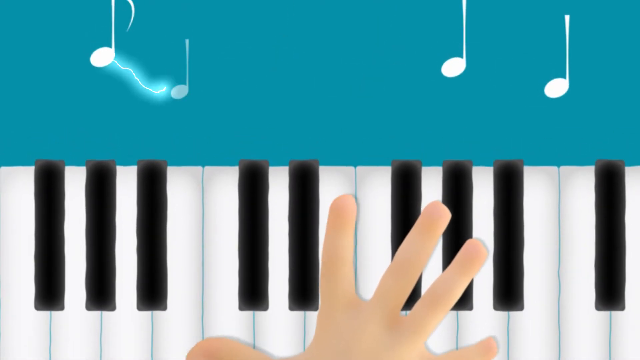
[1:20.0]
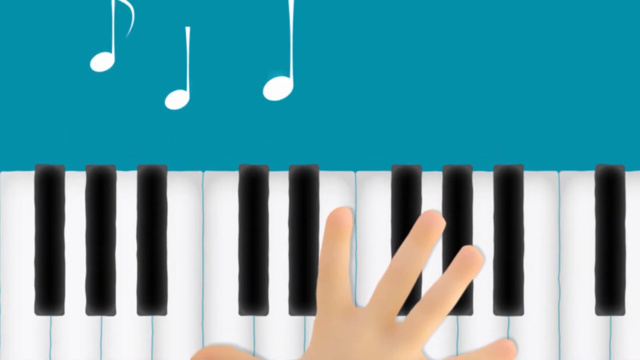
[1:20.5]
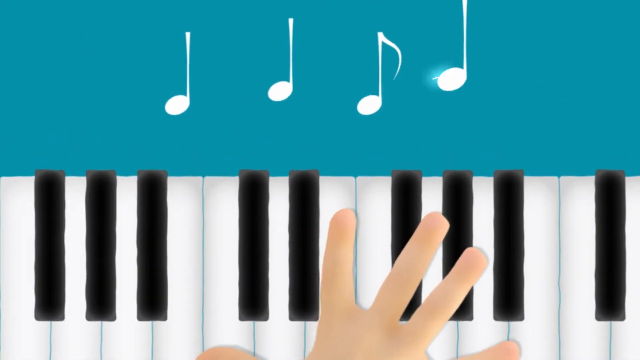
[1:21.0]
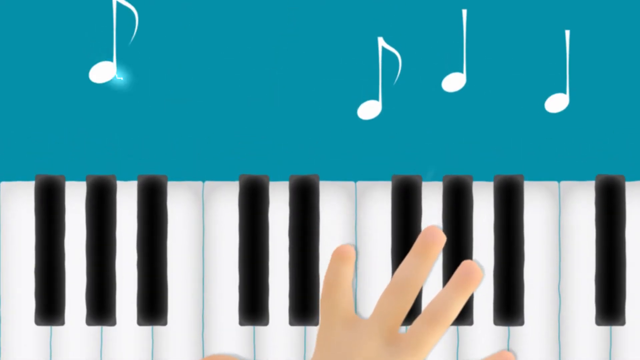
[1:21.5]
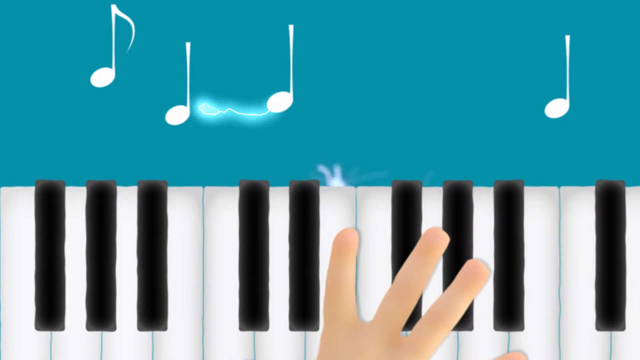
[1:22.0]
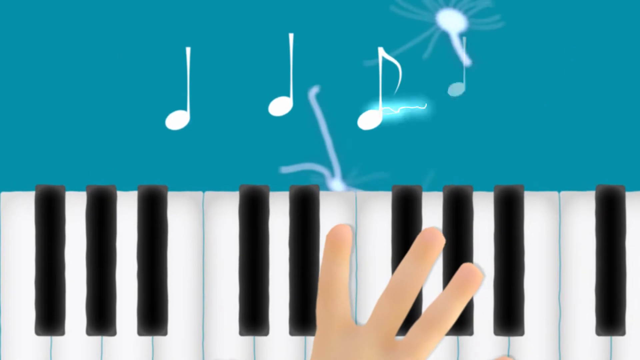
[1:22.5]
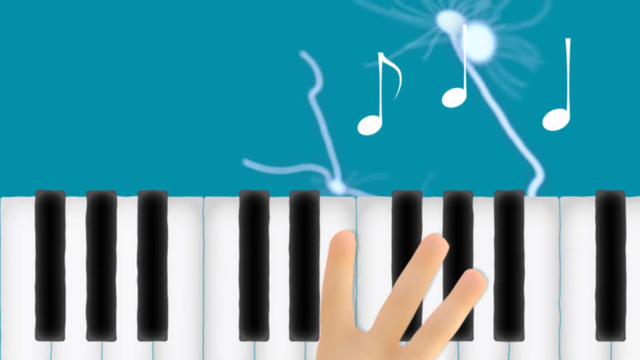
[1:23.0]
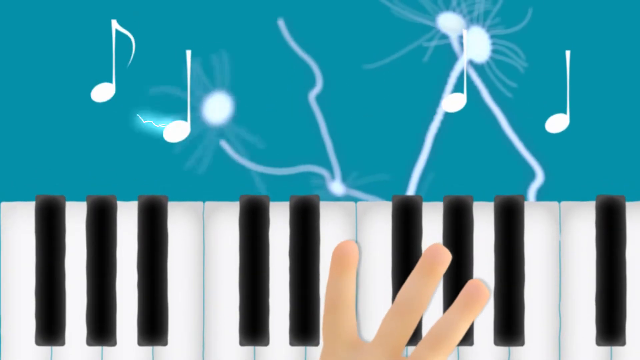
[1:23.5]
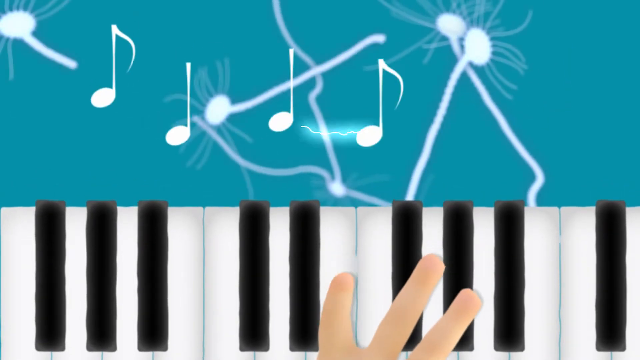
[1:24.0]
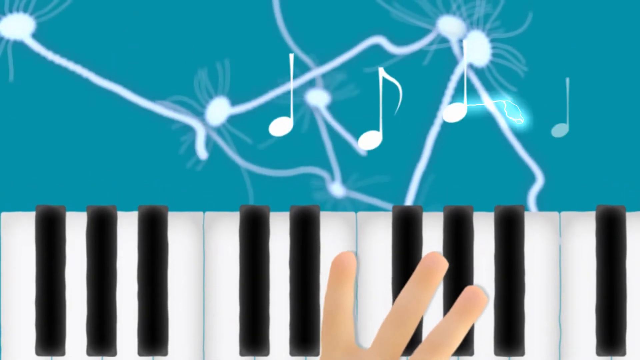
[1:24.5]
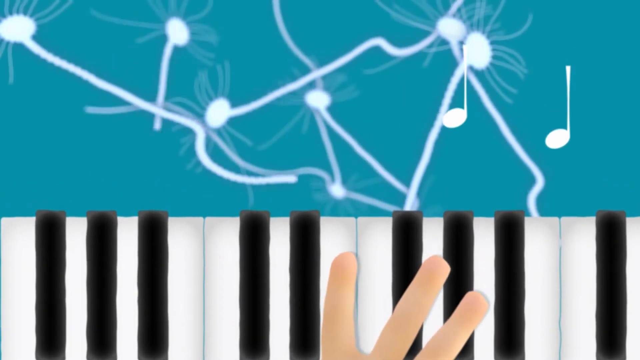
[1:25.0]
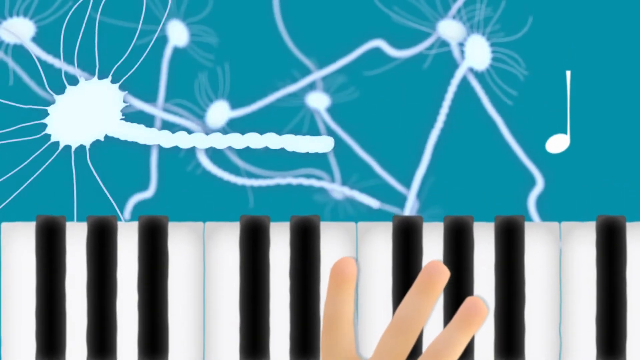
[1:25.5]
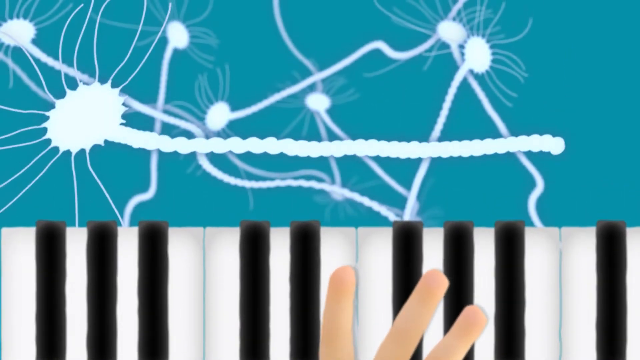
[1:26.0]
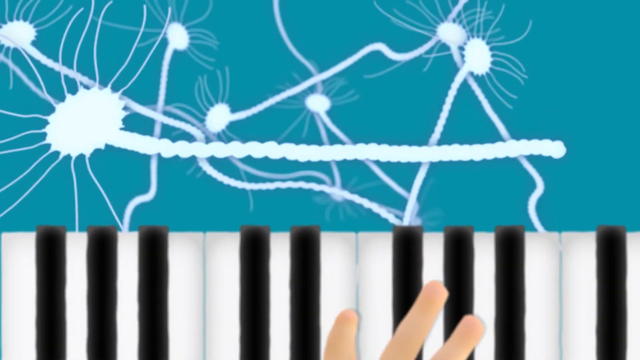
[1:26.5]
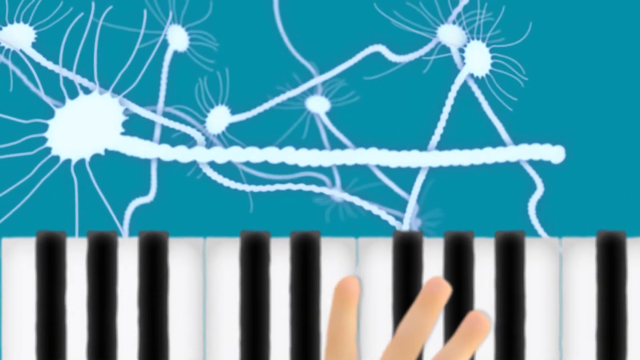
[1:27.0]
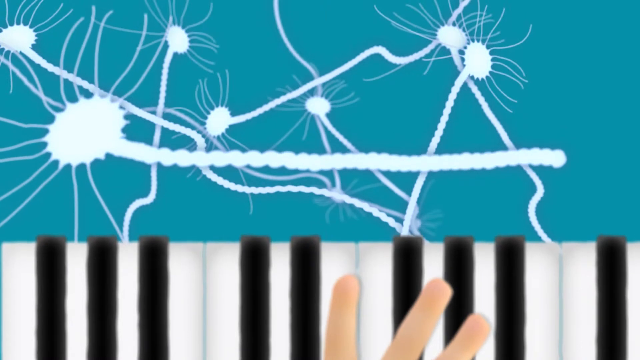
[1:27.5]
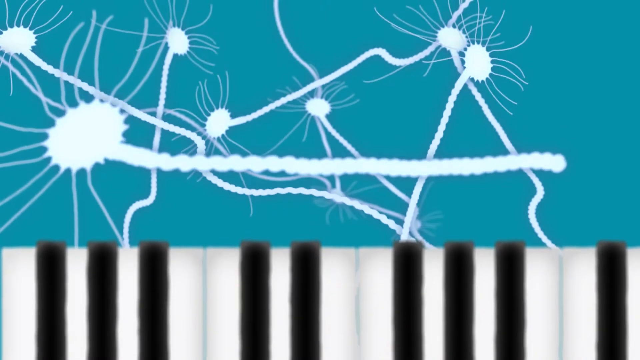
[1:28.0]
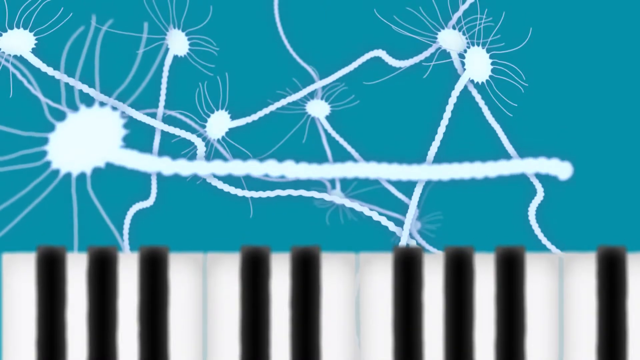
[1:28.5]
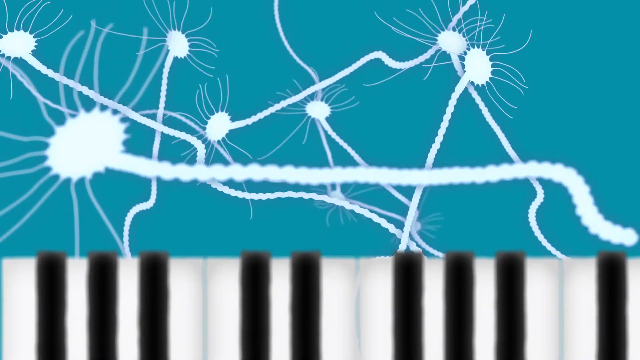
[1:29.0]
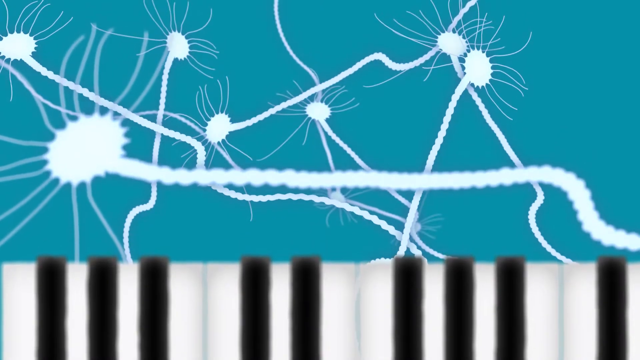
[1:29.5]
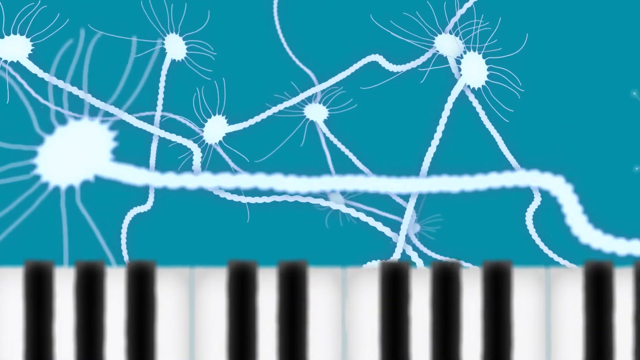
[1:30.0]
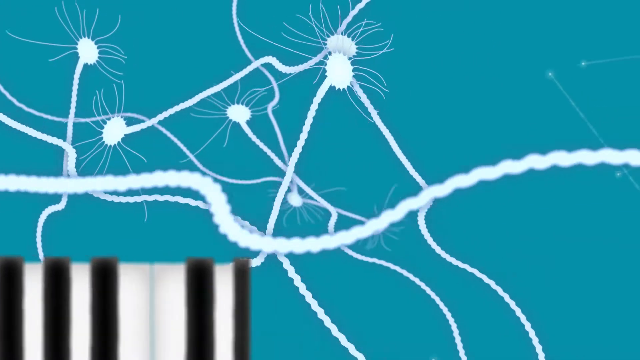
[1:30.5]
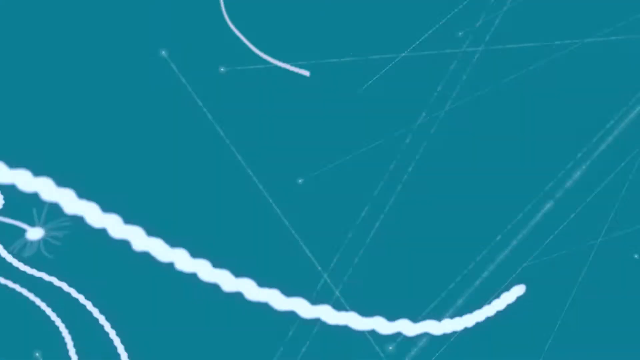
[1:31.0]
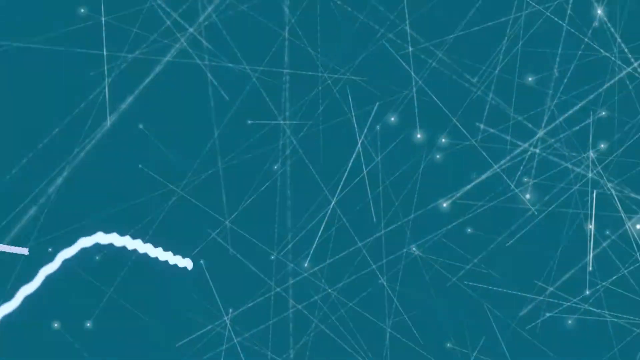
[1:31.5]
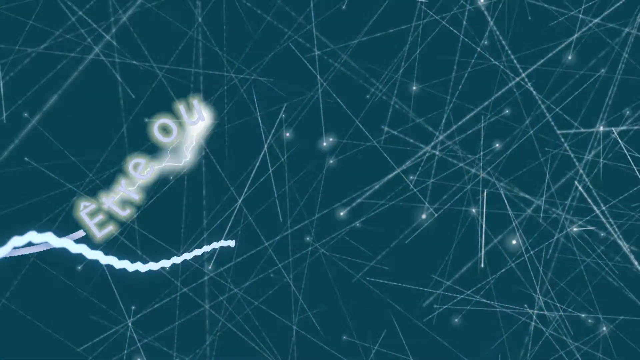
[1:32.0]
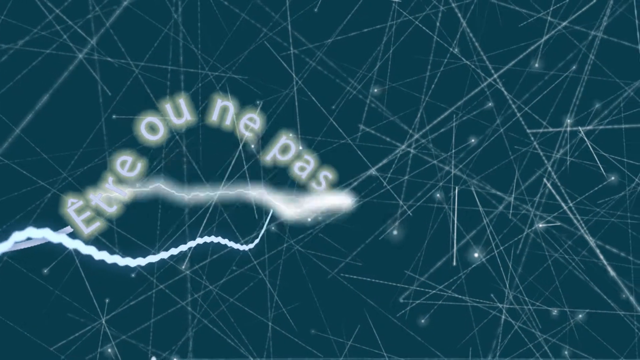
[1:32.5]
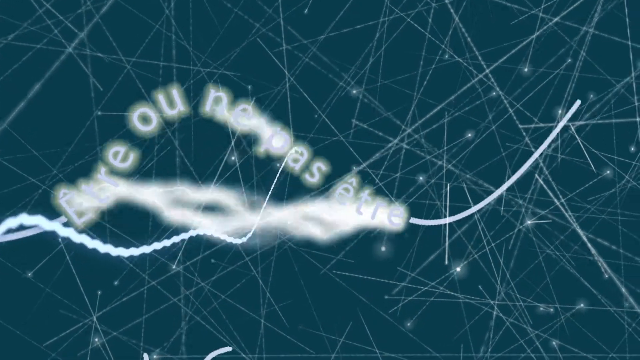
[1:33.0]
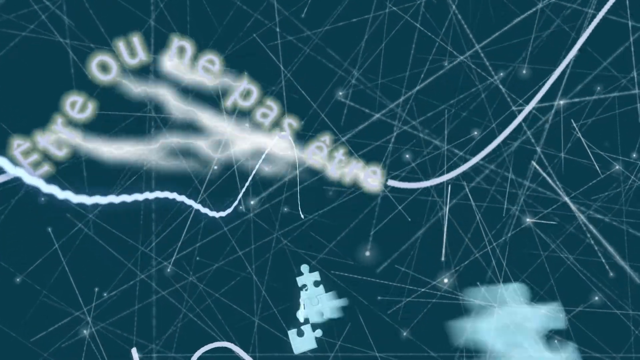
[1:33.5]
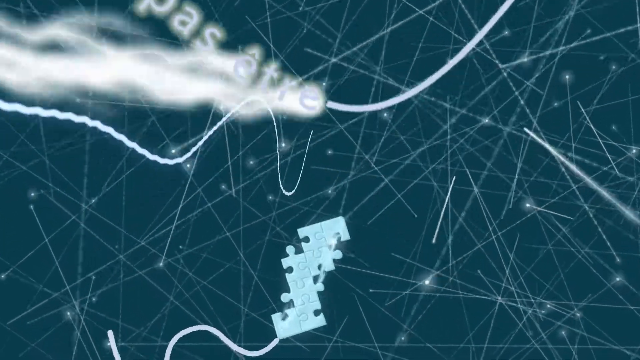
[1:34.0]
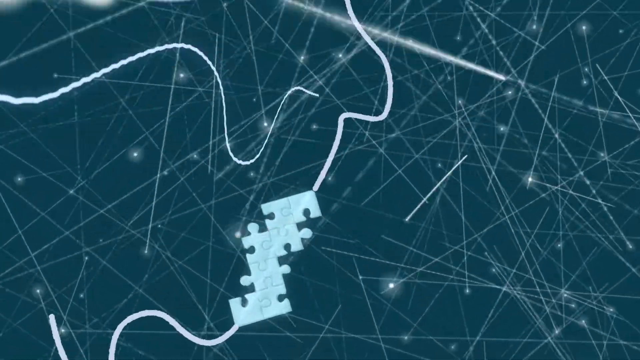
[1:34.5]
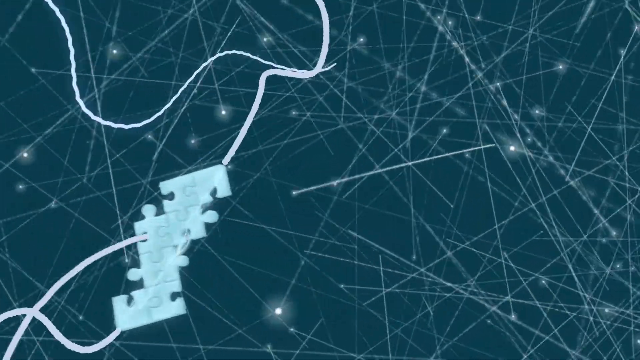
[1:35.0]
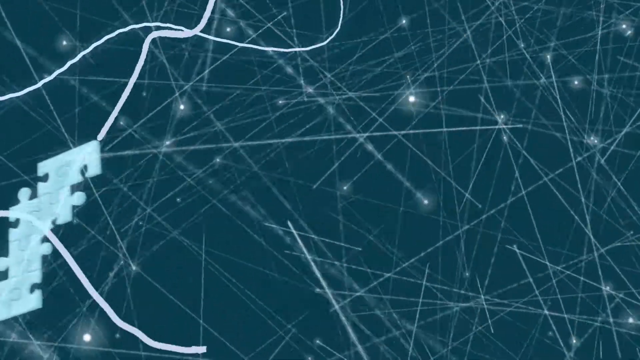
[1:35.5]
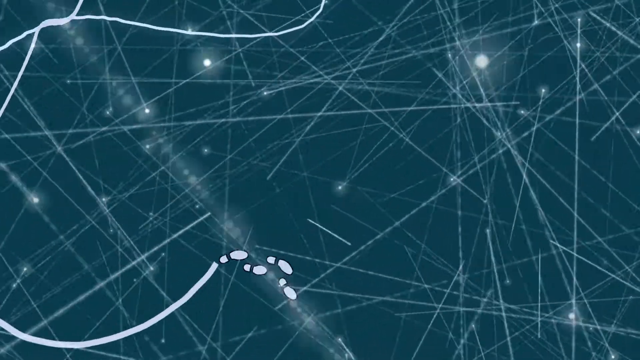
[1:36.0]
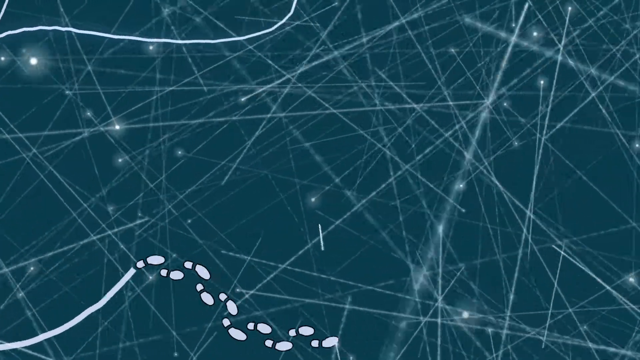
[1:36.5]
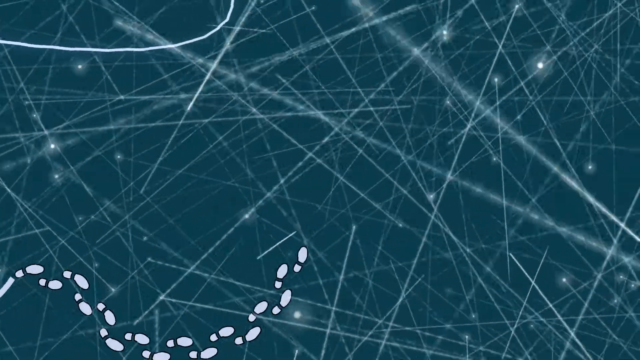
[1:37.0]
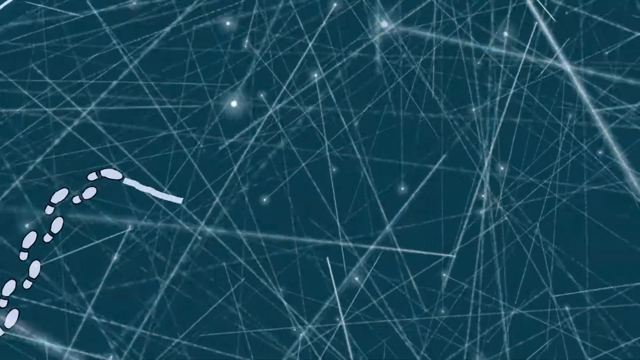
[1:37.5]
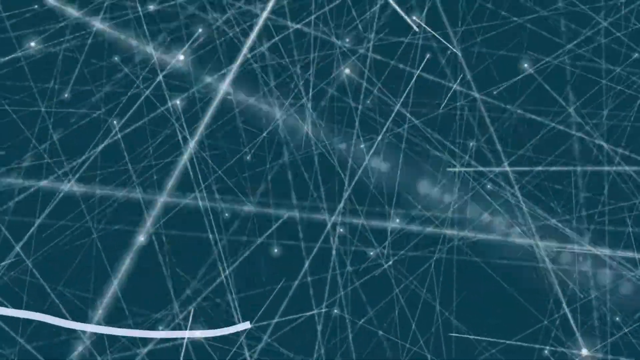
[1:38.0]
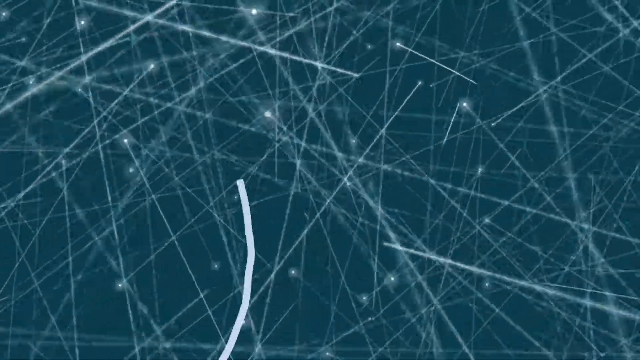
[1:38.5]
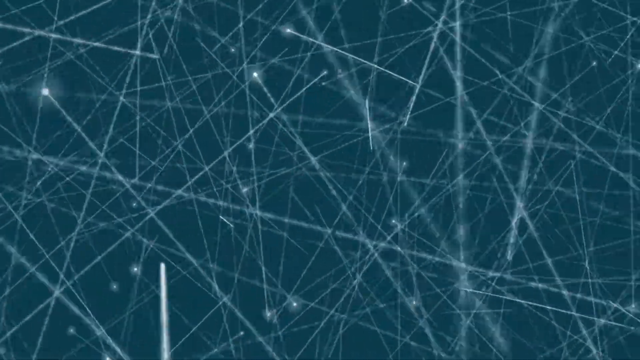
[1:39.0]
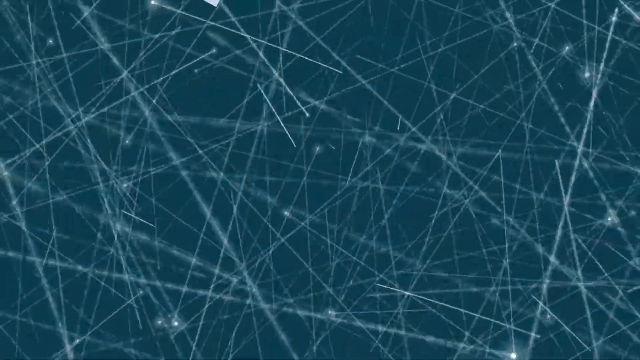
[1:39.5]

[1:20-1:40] Someone plays the keys of a piano, with electric impulses like brain impulses between the notes. There are also many sharp lines resembling neurons in a brain, and a line zigzagging around.